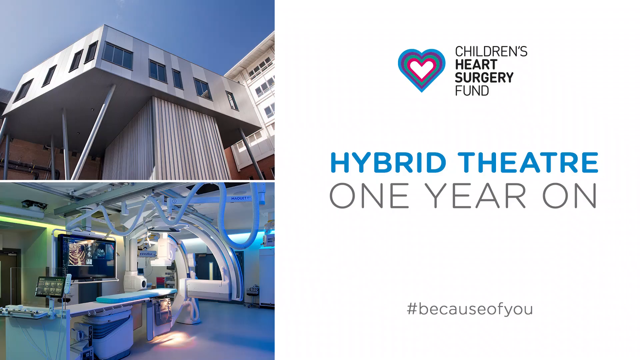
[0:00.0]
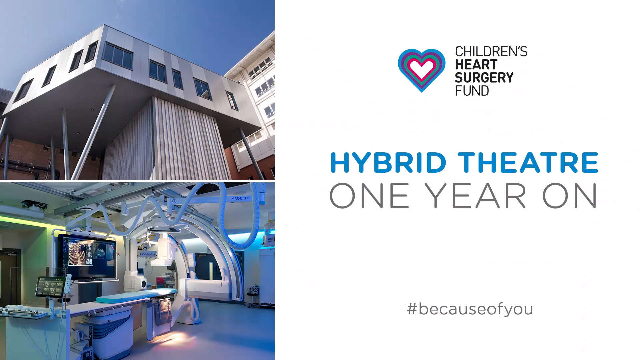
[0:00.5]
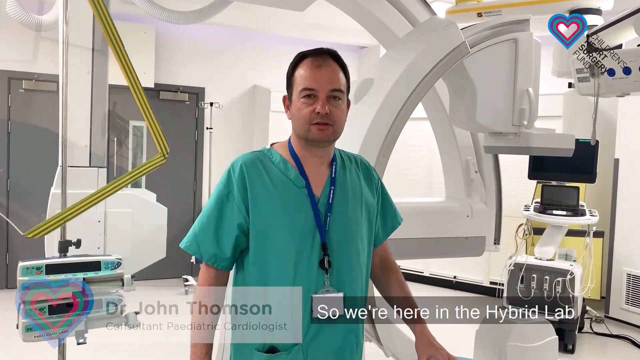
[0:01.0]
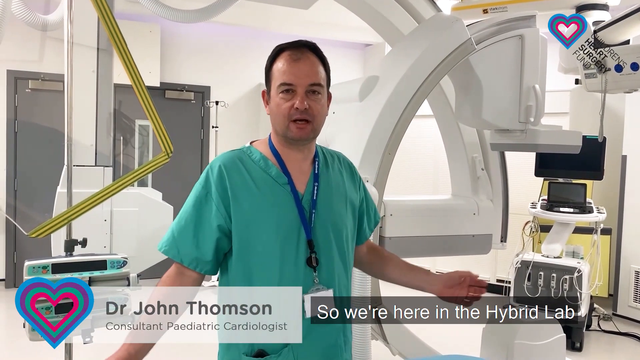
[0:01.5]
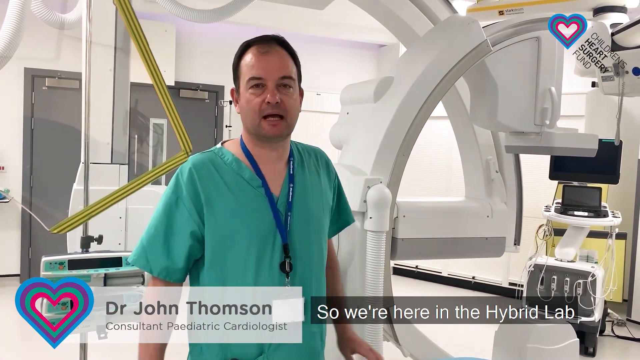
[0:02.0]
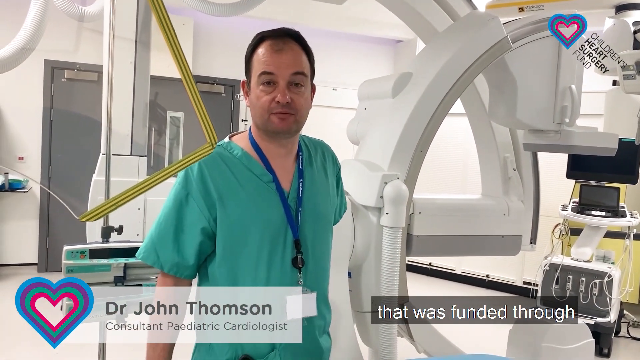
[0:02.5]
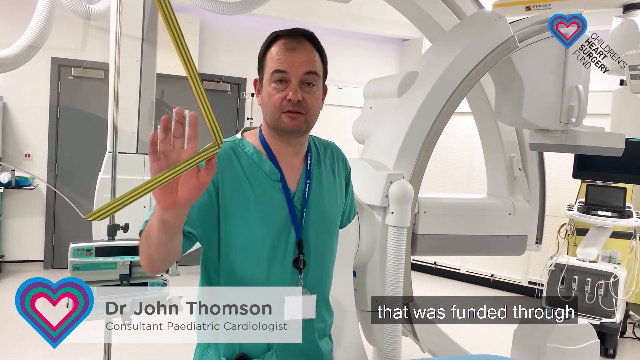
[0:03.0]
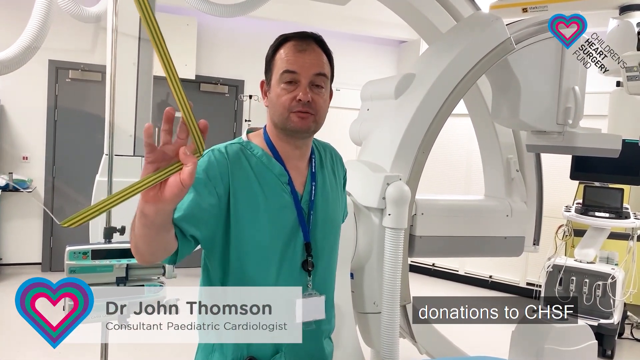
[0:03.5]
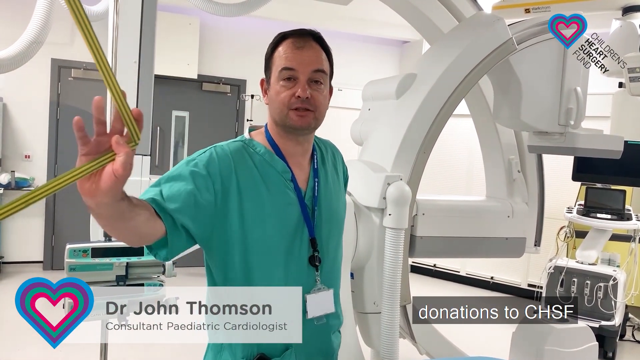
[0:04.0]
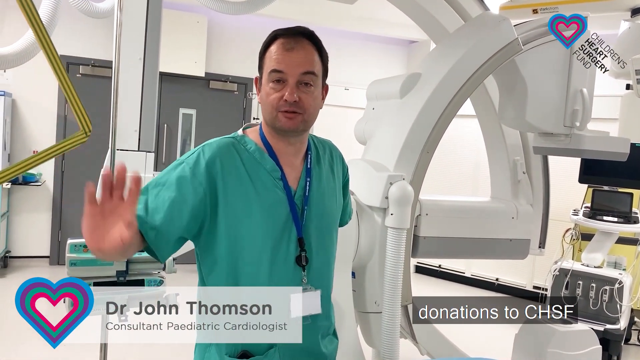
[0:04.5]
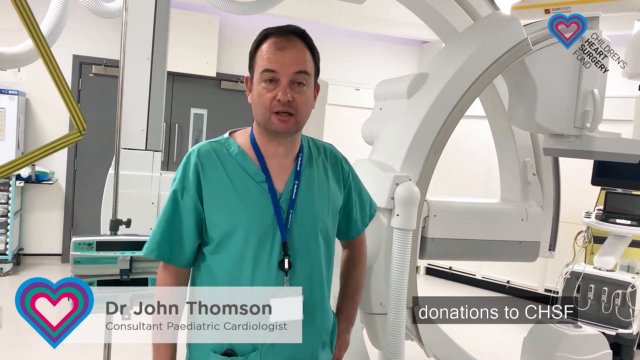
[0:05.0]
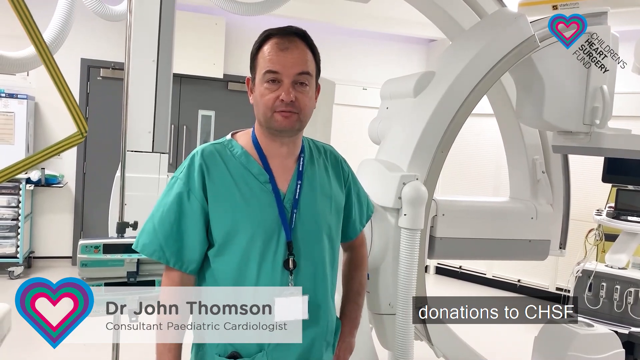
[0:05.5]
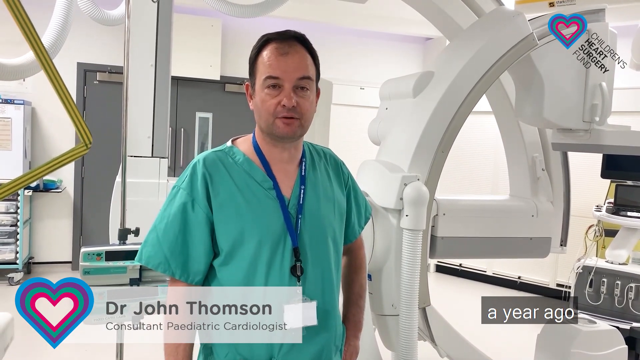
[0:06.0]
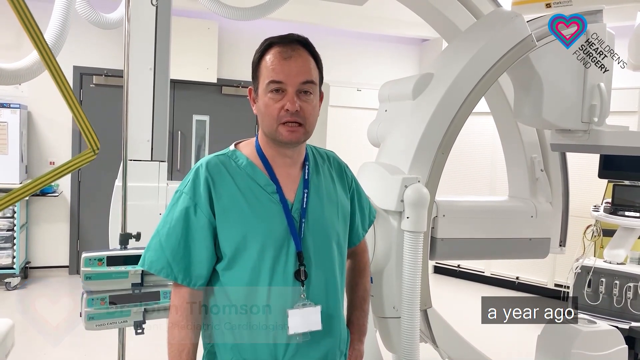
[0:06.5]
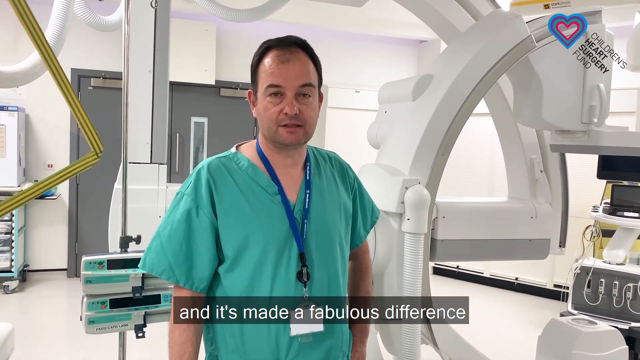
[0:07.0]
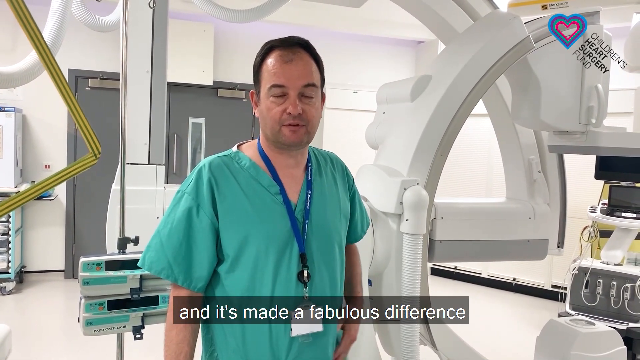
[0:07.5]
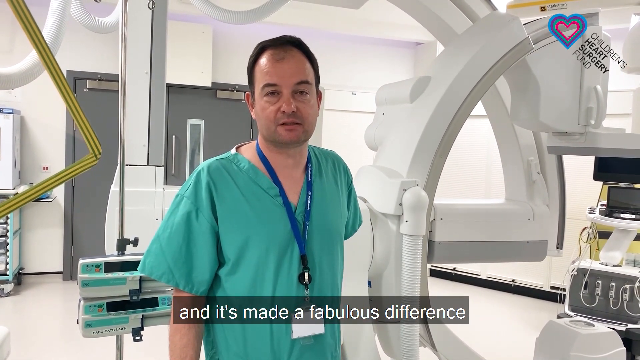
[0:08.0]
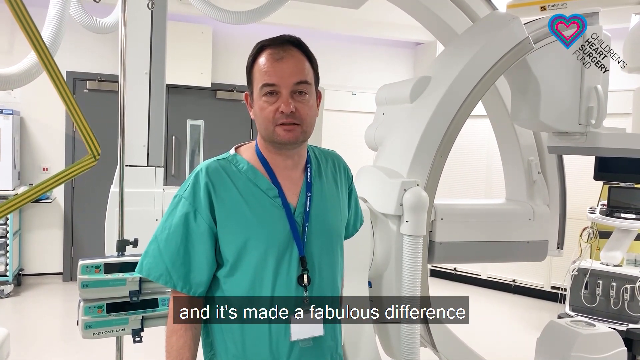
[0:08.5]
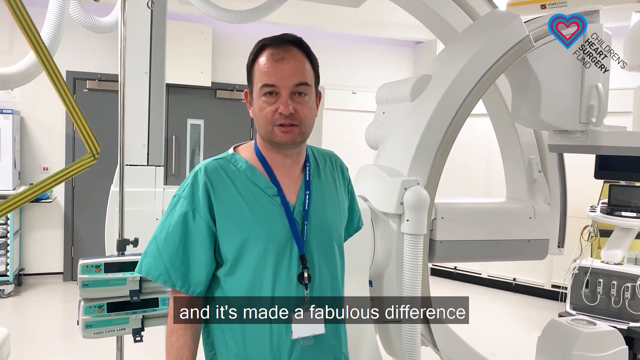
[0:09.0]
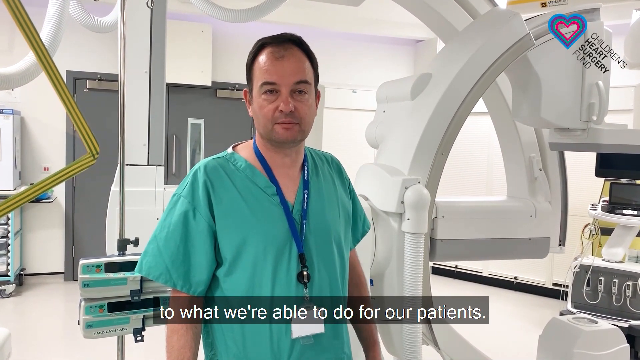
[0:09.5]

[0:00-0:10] The video opens on a starting screen with a logo at the top right for Children's Heart Surgery Fund, the name stacked word by word: "Children's" at the top, then "Heart," then "Surgery," then "Fund." To the left is what looks to be the organization's logo, a heart that switches from blue to red to blue from the outside inward, with the very inside of the heart in red. At the bottom right is a hashtag reading "#because of you." As the video starts, a scientist named Dr. John Thompson appears.